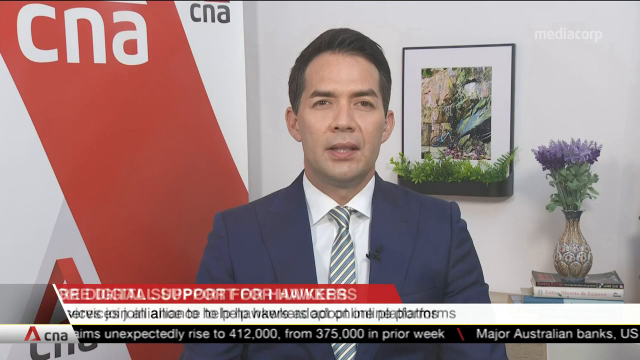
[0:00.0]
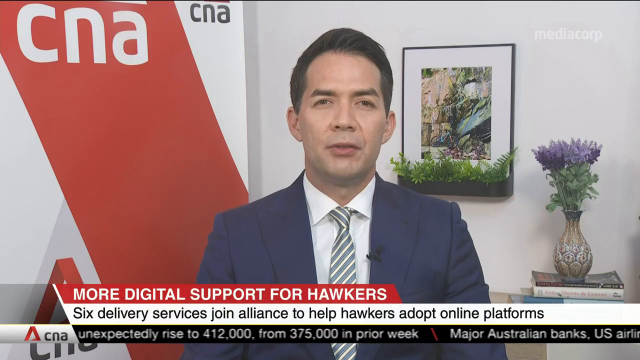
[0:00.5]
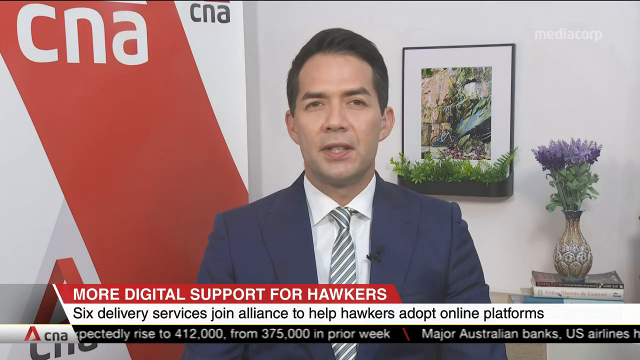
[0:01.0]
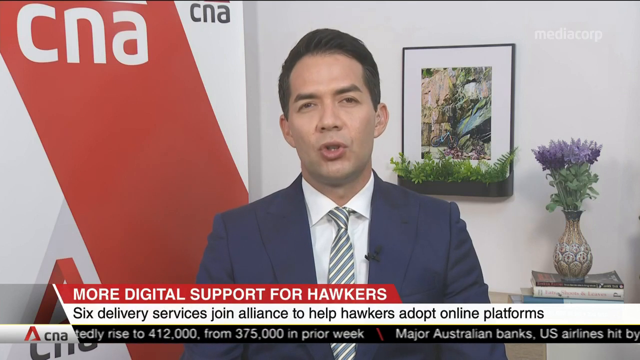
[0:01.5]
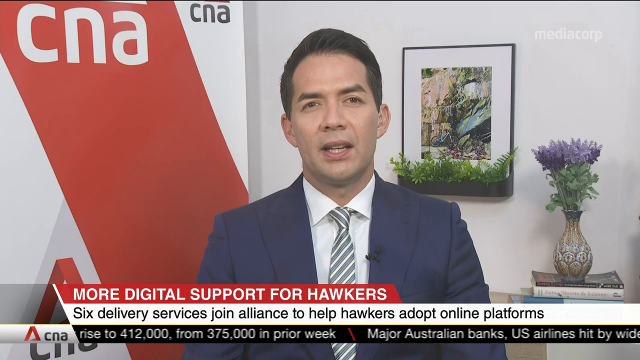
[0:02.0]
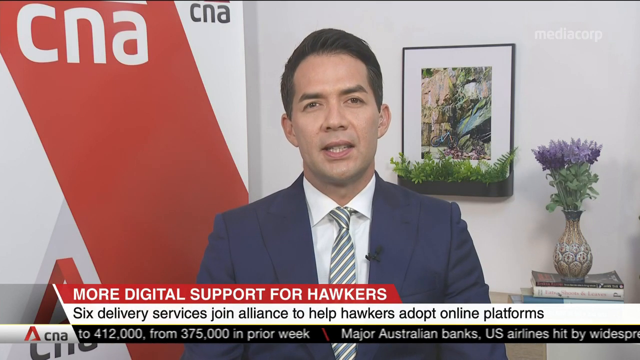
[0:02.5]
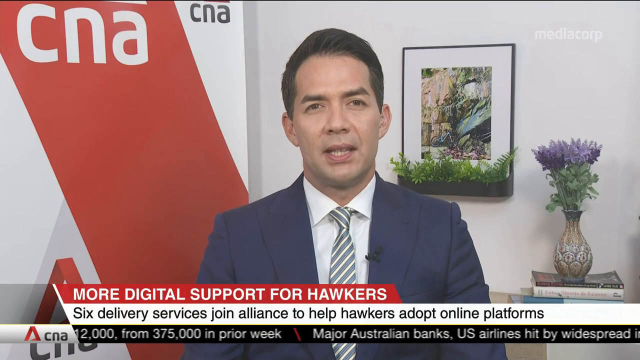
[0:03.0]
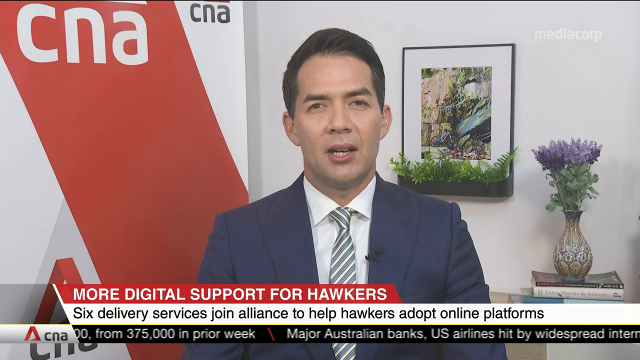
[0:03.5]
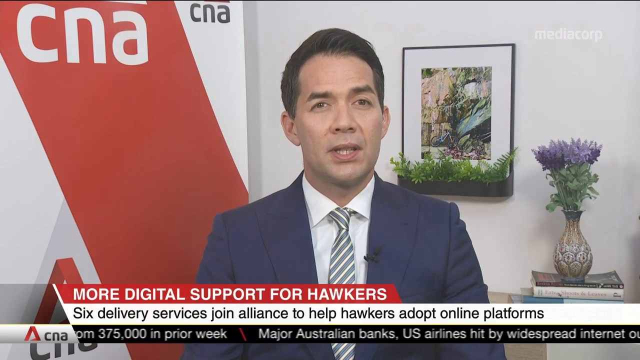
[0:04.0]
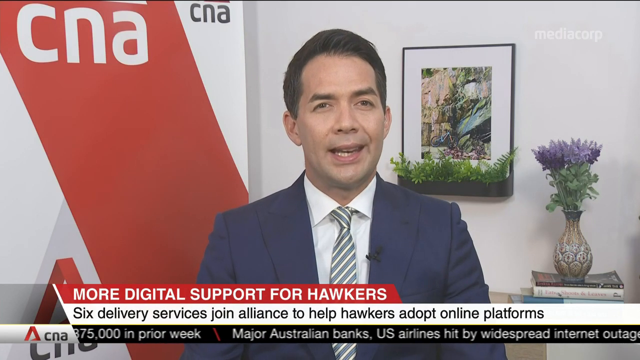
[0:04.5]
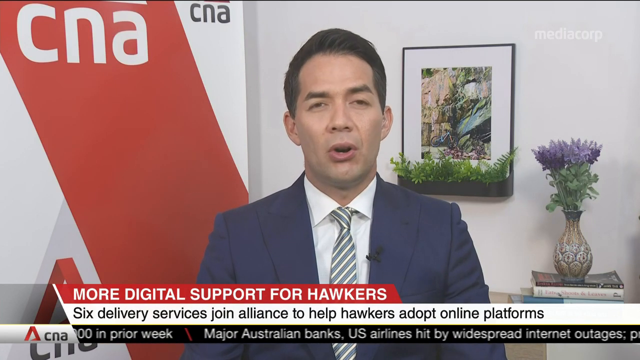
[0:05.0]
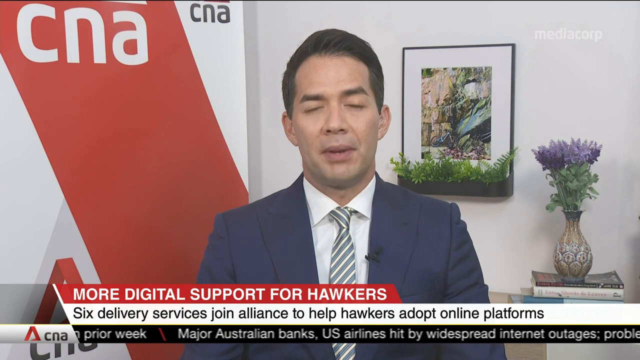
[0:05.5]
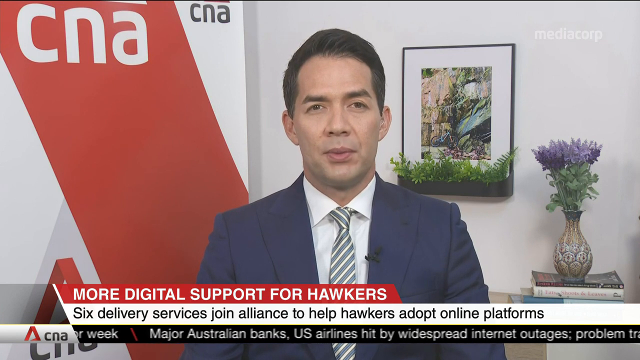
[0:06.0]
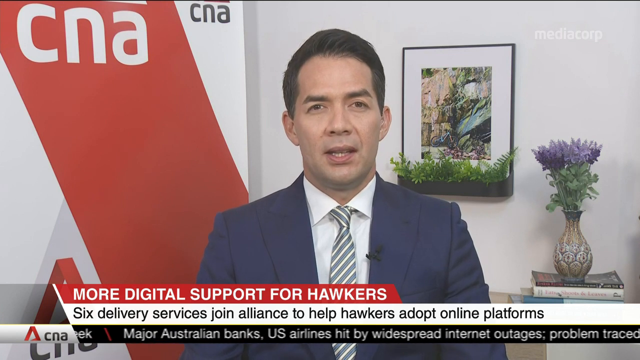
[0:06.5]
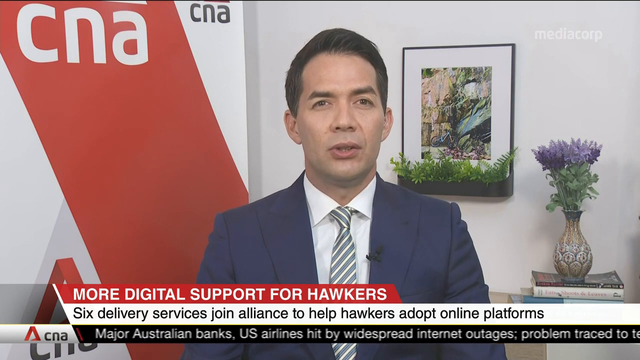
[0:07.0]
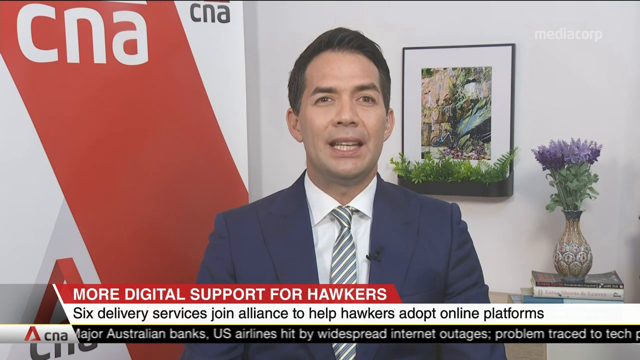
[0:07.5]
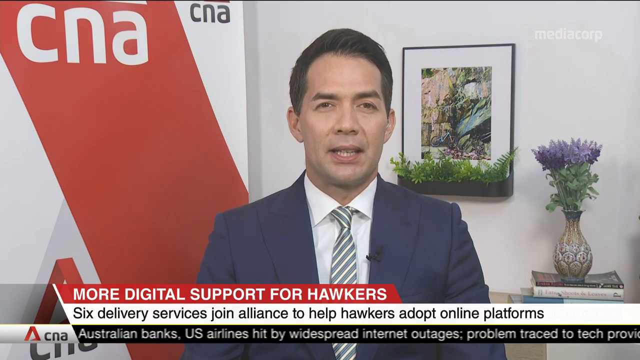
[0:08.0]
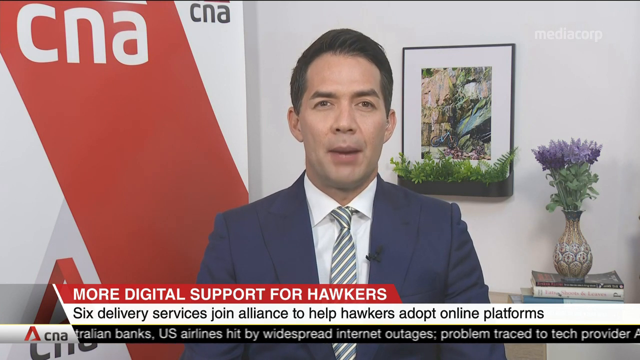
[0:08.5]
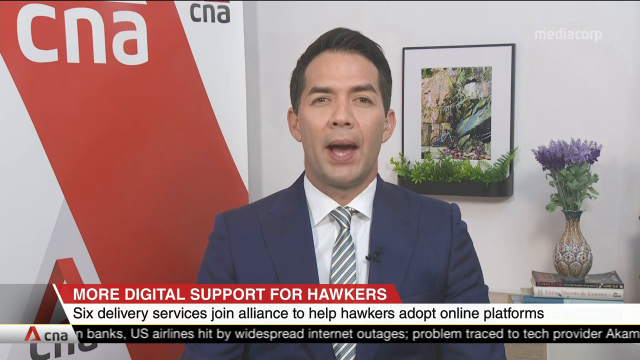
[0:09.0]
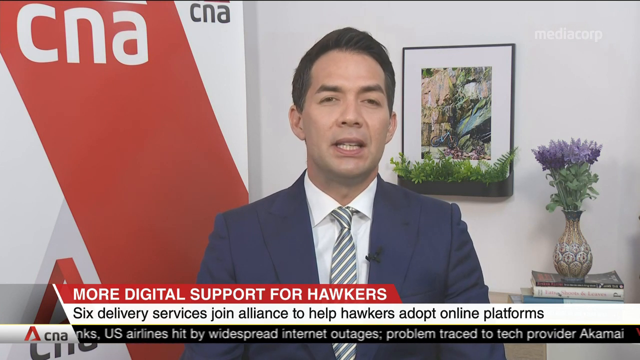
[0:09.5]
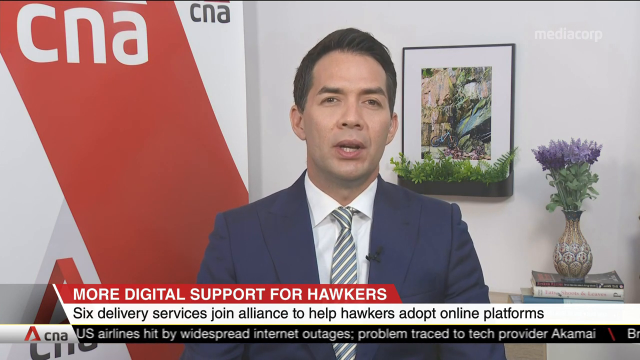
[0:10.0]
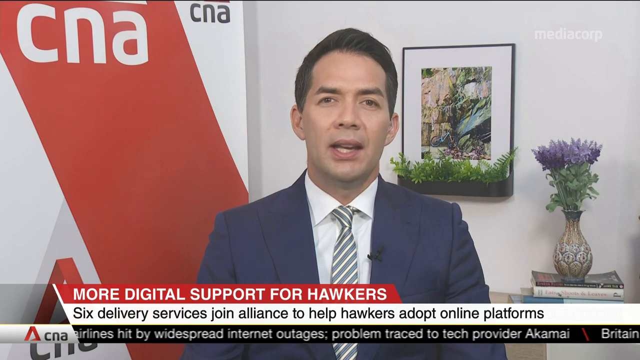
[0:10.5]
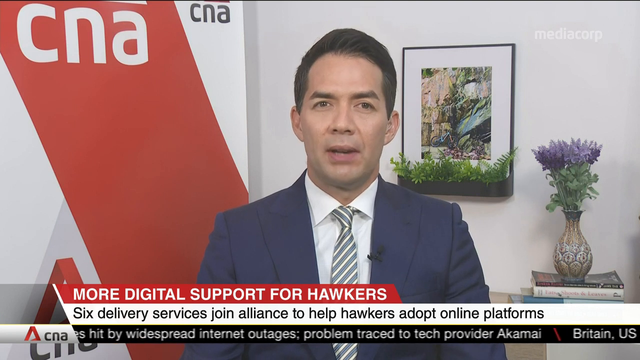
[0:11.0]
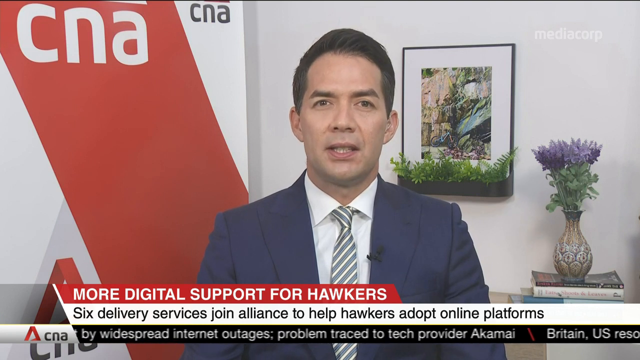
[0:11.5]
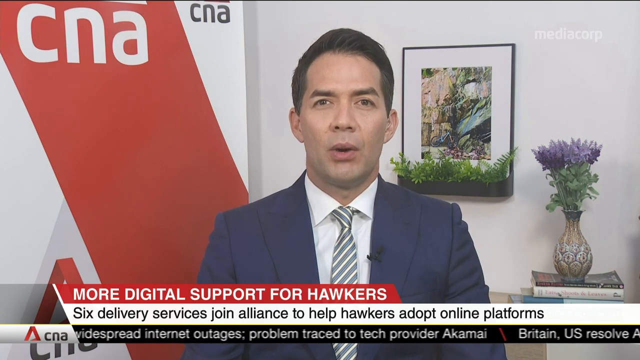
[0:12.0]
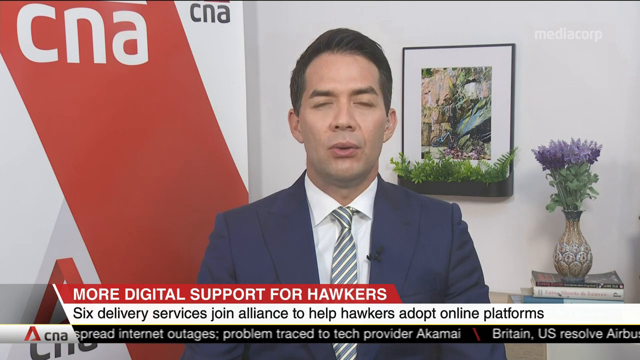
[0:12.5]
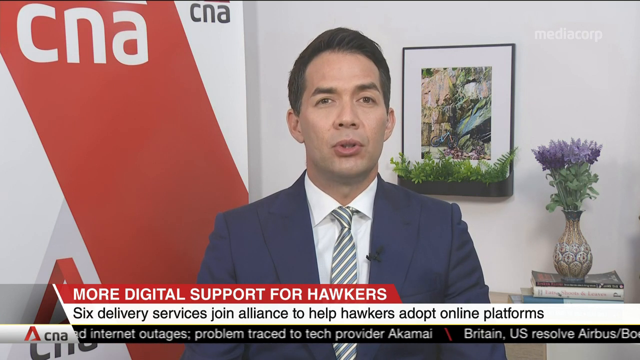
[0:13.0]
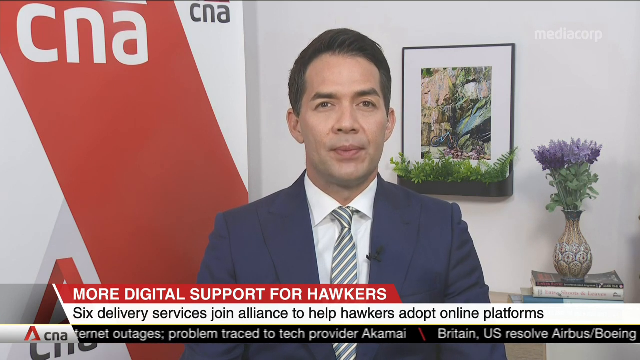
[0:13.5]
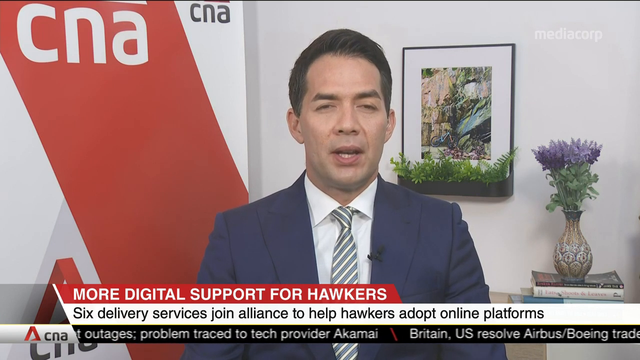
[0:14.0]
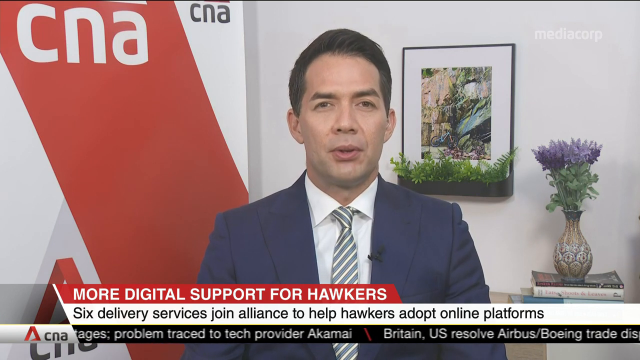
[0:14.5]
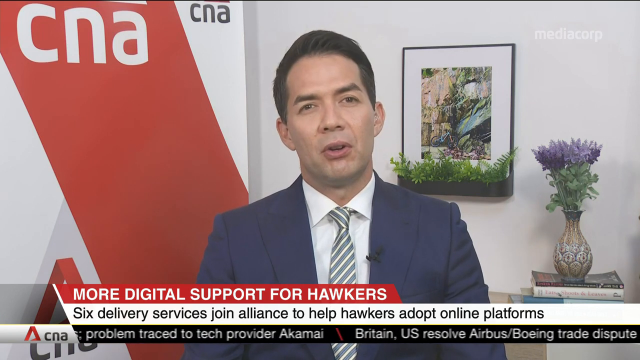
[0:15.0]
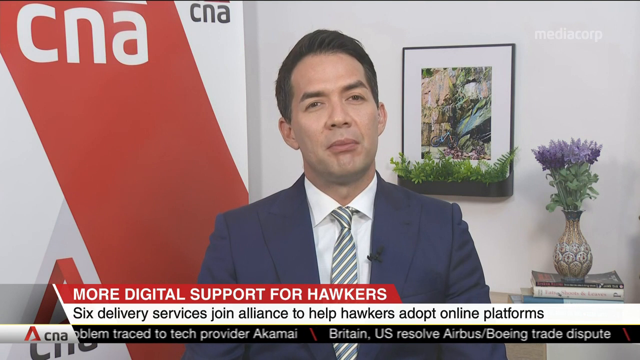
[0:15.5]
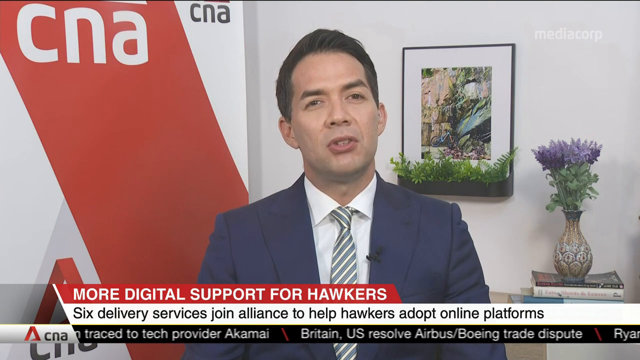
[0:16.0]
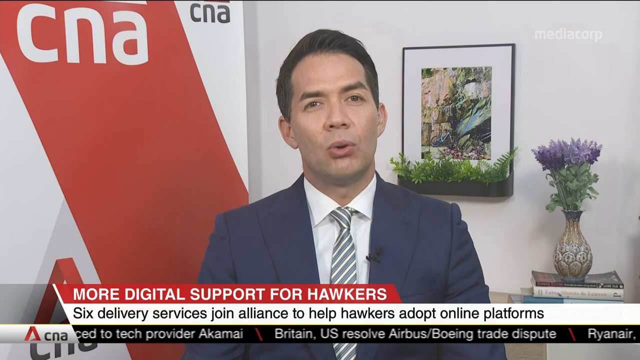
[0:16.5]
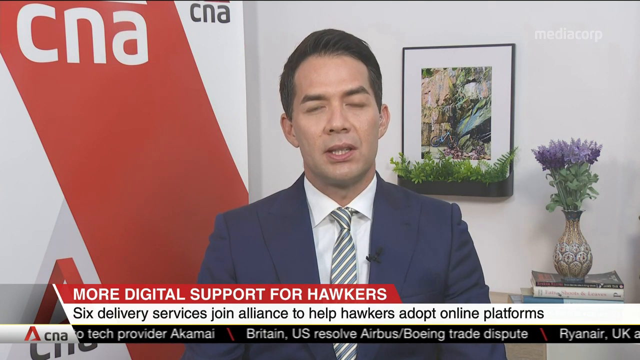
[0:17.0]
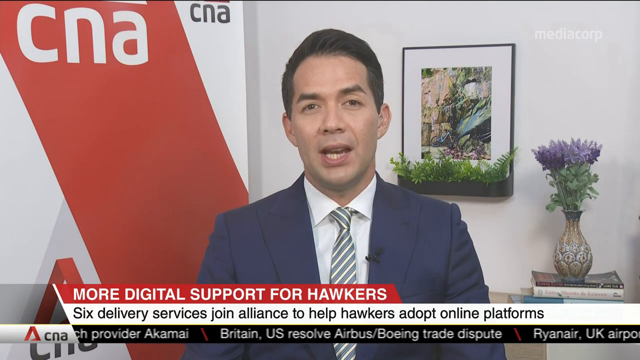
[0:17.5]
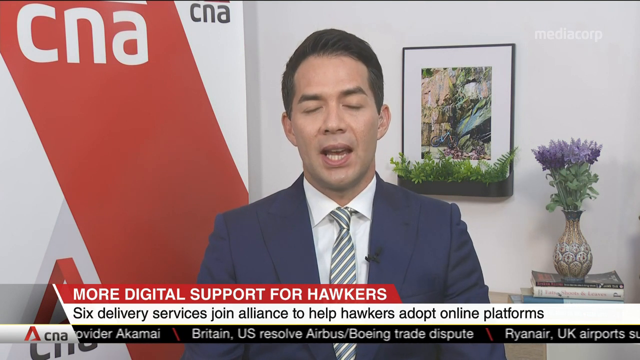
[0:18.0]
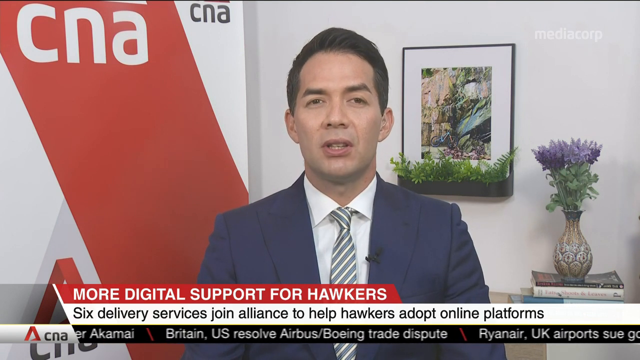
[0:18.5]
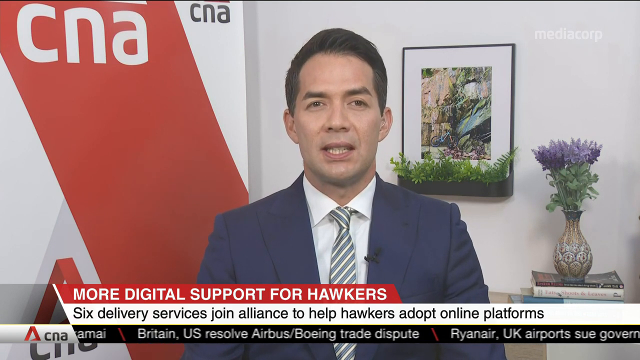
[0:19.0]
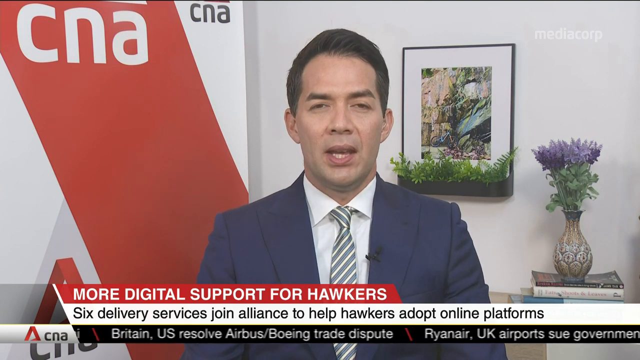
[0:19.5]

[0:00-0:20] The channel is CNA. On-screen text says "more digital support for hawkers" and "Six delivery services join Alliance to help hawkers adopt online platforms." The shot is a standard news anchor shot of a man, the news anchor, talking, and it then cuts to another person.